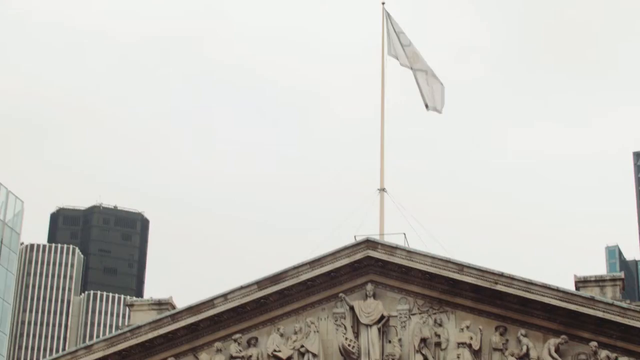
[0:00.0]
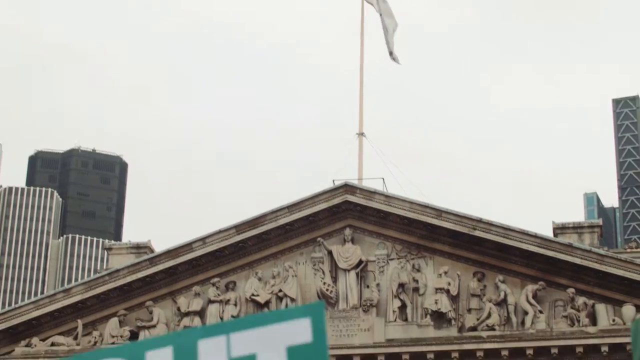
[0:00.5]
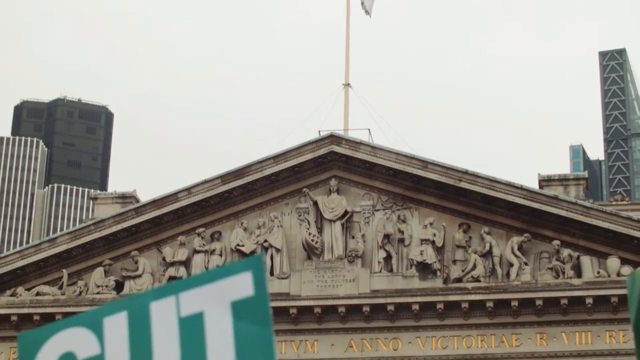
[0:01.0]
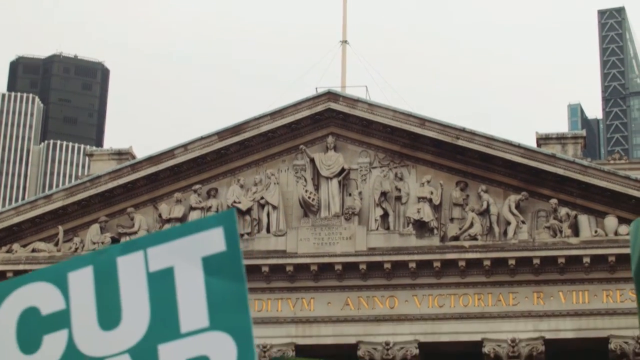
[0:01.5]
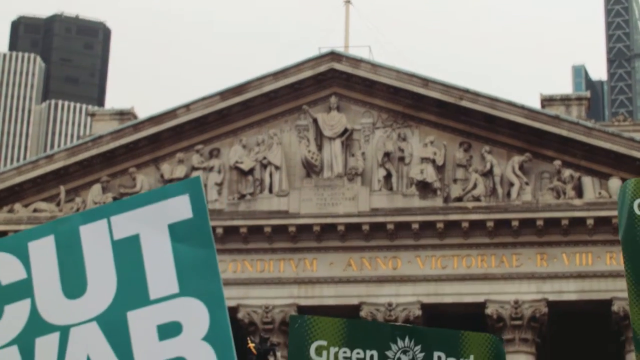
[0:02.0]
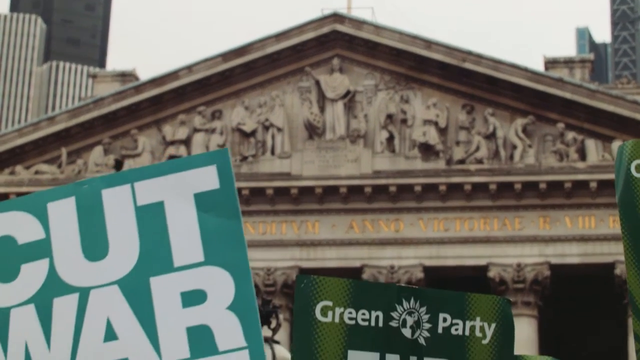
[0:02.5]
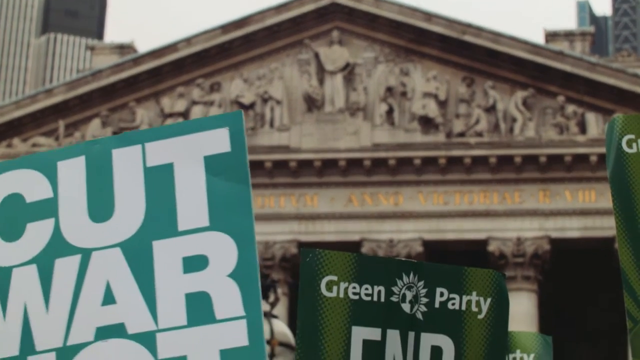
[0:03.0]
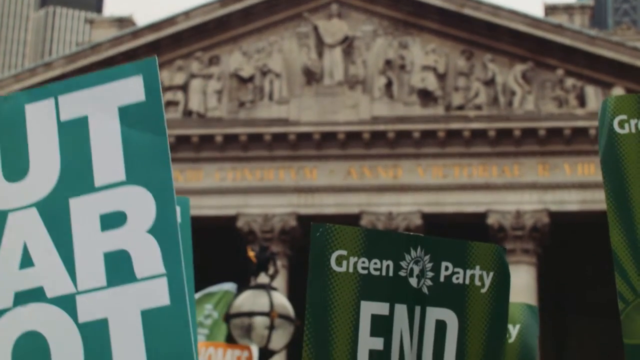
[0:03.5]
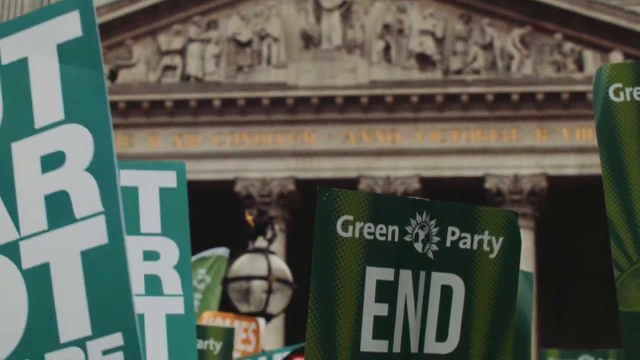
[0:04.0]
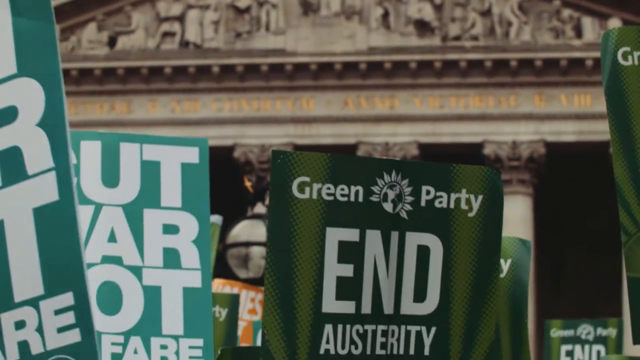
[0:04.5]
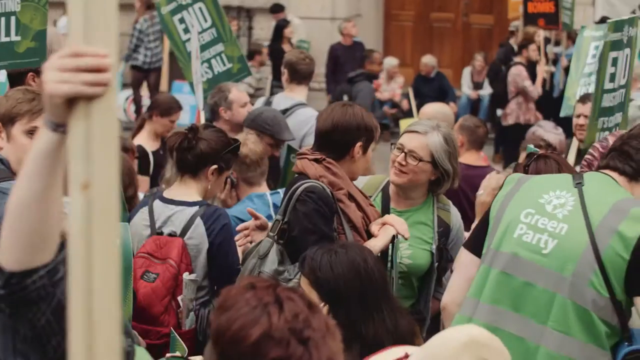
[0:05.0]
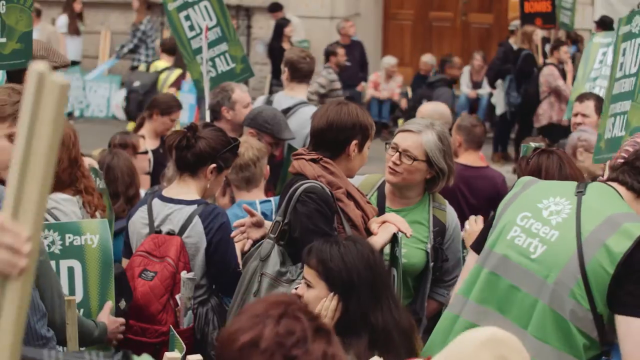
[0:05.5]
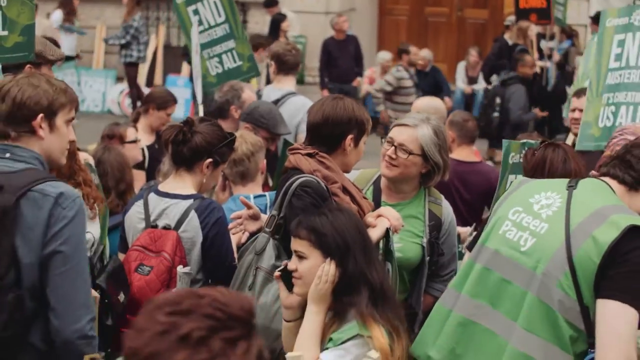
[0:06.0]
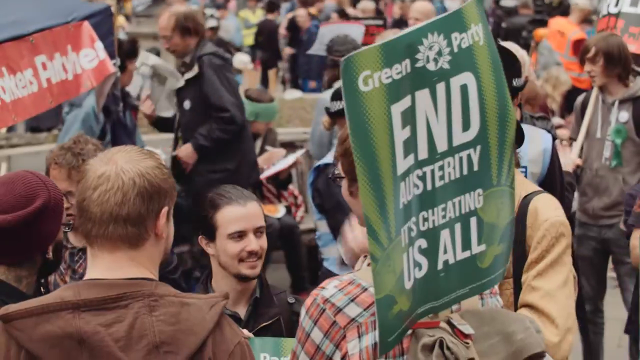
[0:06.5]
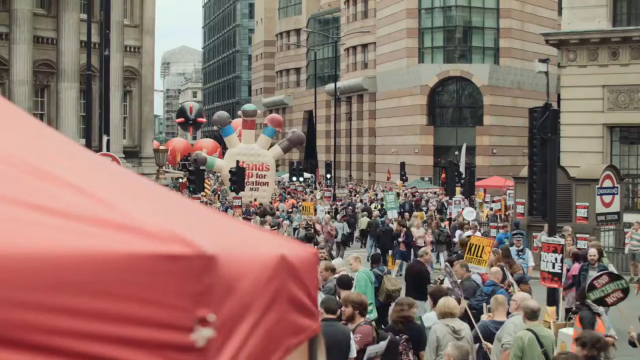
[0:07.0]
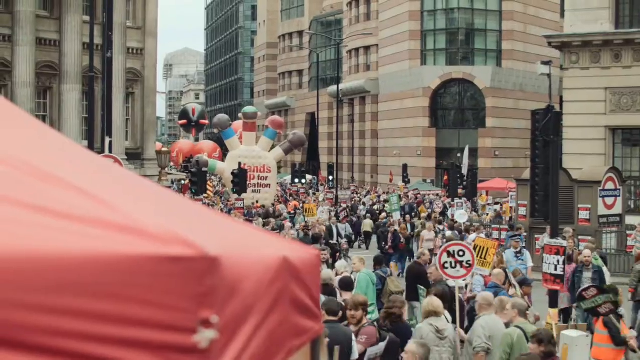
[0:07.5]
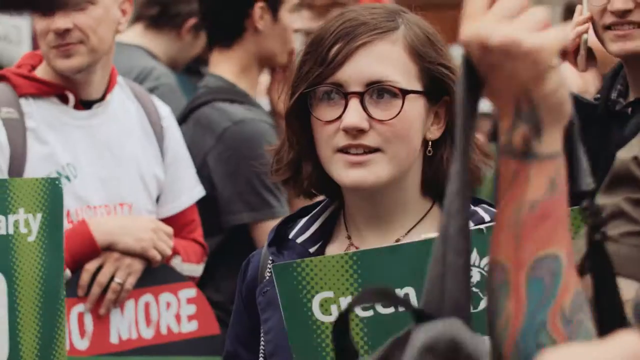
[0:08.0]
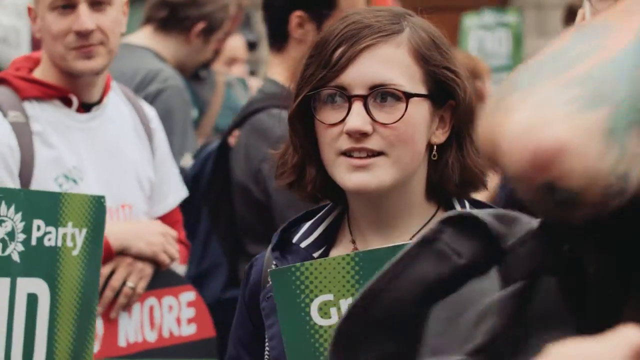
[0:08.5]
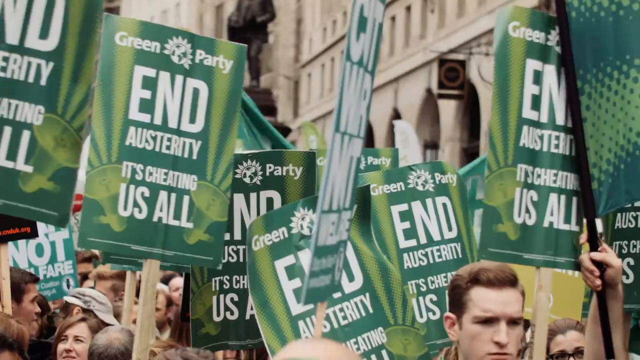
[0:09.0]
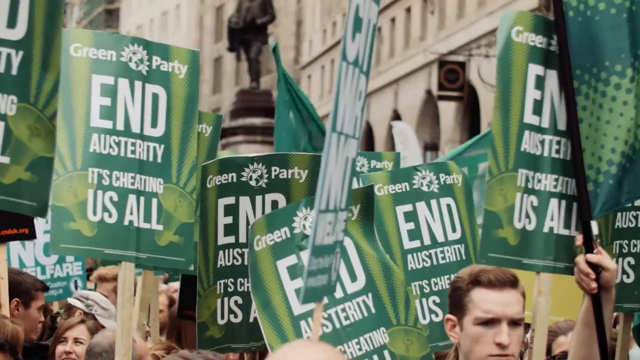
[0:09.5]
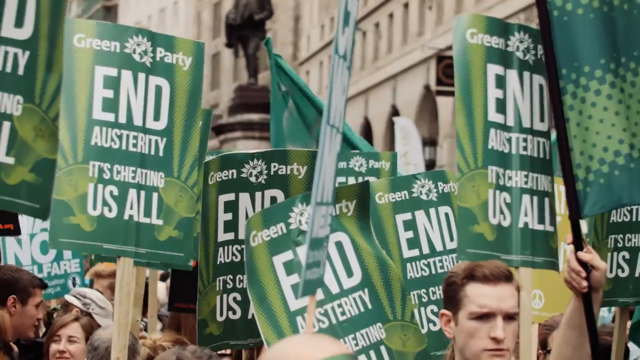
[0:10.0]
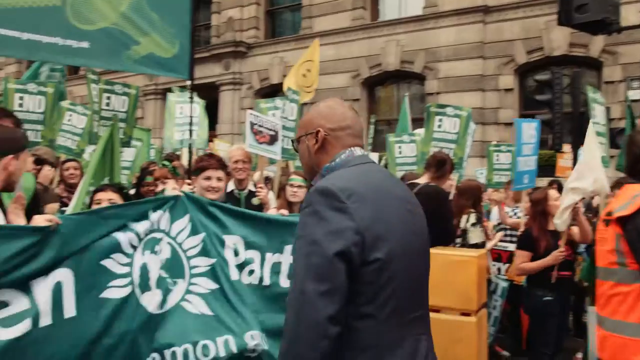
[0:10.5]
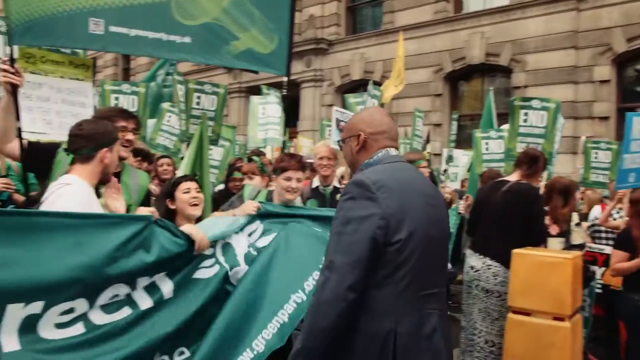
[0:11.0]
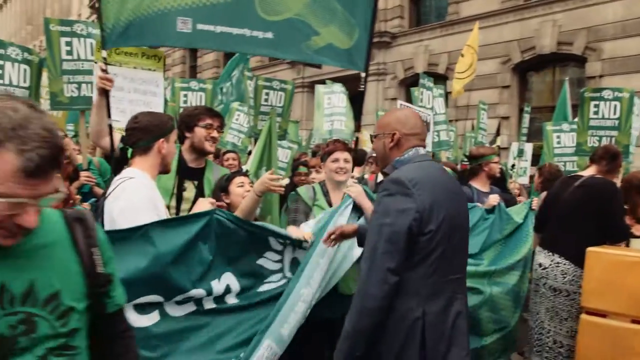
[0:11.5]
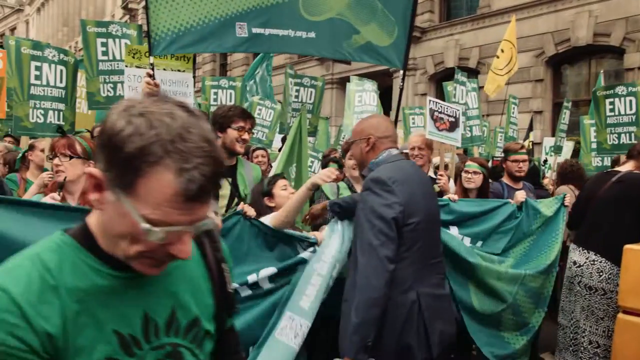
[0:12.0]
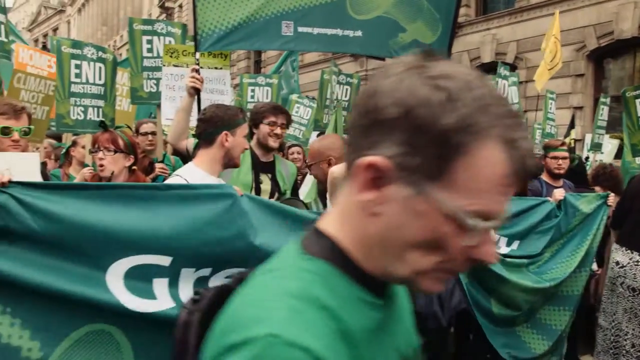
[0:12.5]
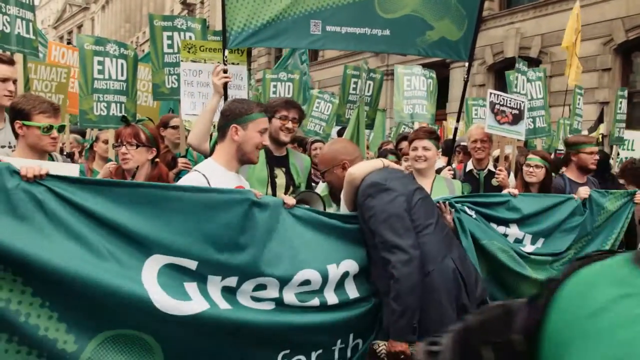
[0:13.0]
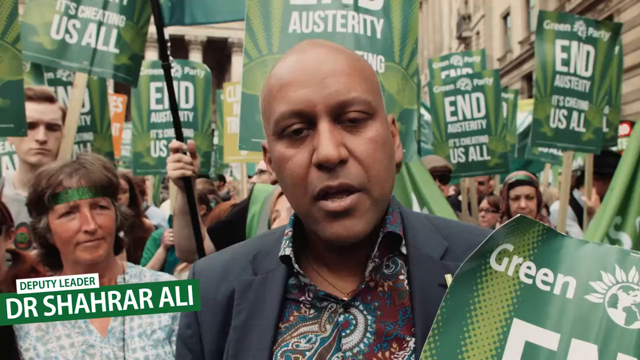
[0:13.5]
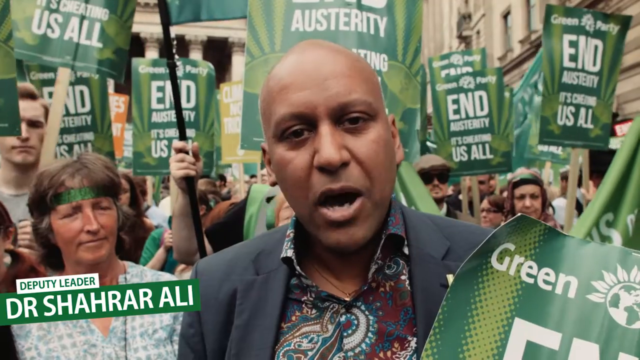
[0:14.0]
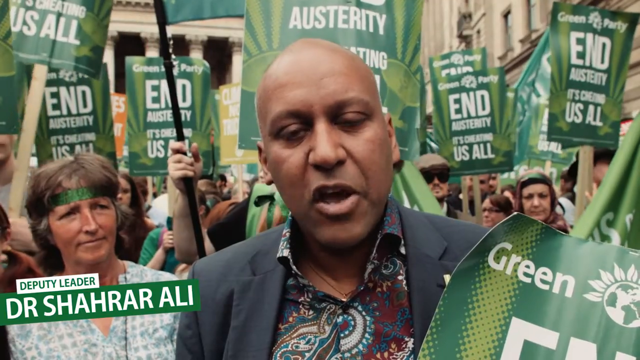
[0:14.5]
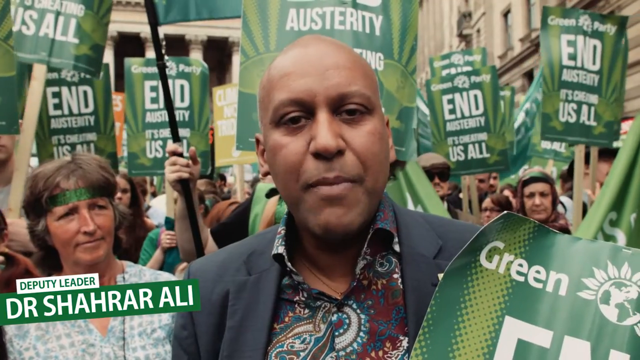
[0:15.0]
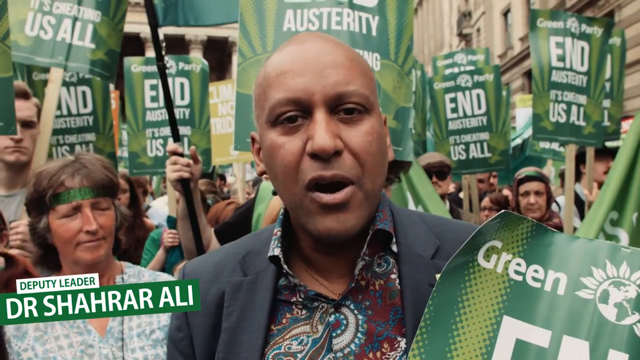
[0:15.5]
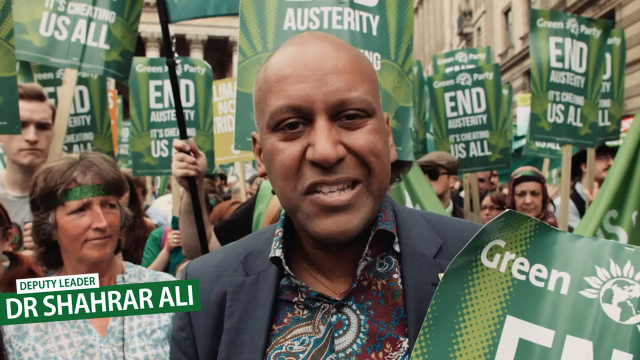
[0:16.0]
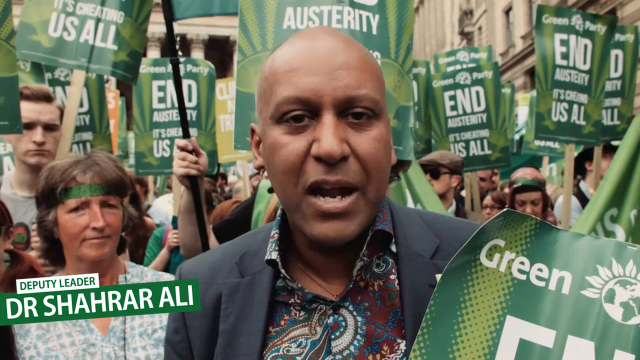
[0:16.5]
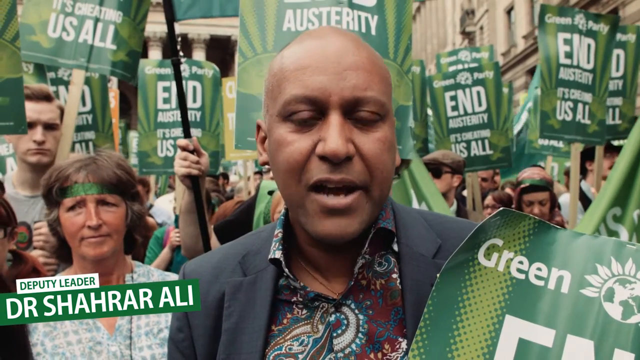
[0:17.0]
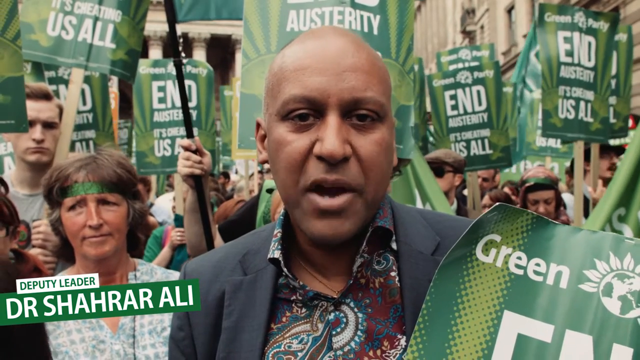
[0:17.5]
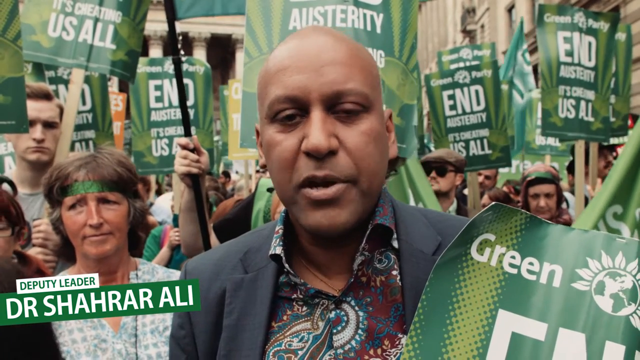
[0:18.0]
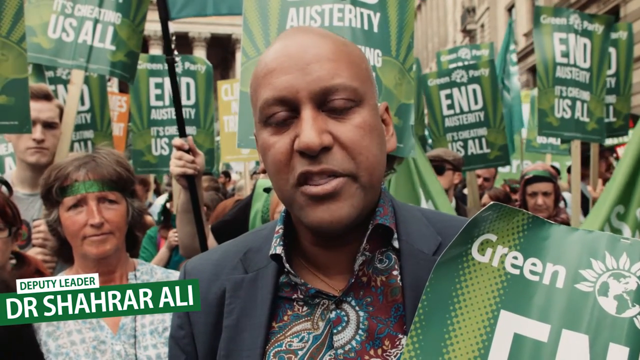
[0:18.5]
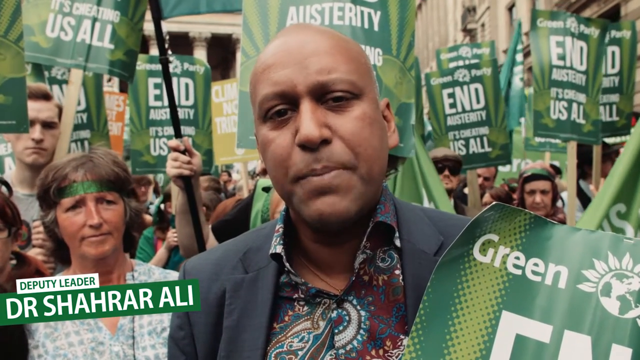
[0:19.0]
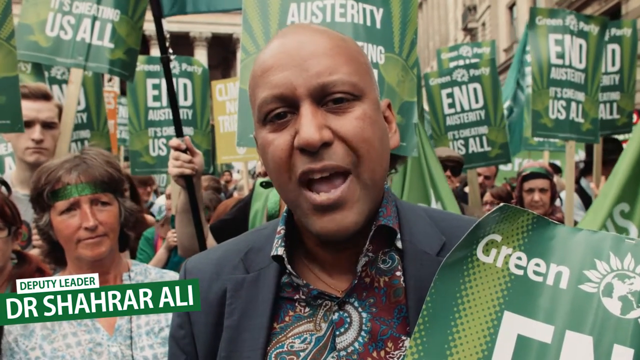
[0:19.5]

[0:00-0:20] A protest takes place in front of what appears to be a Roman-style columned building with a triangular roof. Many people hold black cards that read "Green Party" and call for the end of something; most of them appear to be Caucasian. One woman has a red backpack. Another woman has a shoulder bag and what looks like a brown shawl, and she is speaking to another Caucasian woman who wears prescription glasses, has a good amount of gray and white hair, and wears a green t-shirt. Text reads "Green Party, end austerity, it's cheating us all." The camera pans quickly around people holding much the same black card. An African-American man wearing prescription glasses gets a hug from one of the protesters, and they are all holding tarpaulin-like Green Party messaging. The man, named as Dr. Shahrar Ali, the deputy leader, speaks to the media. He wears a black coat with a multicolored undershirt. Behind him, to his left, is a somewhat more elderly Caucasian woman with a green headband across her forehead. The columned building has multiple relief statues depicting people in various acts of labor, with what looks like a lady of justice holding weighing scales among them, and a white flag above the building.